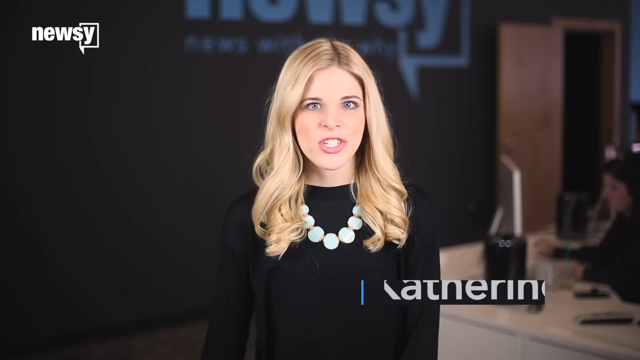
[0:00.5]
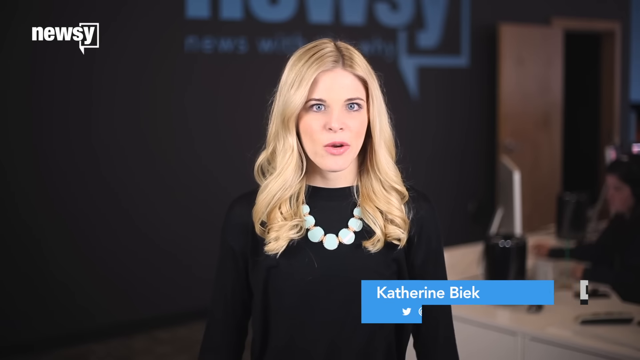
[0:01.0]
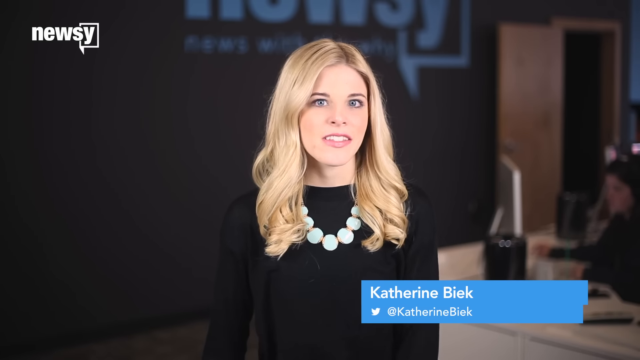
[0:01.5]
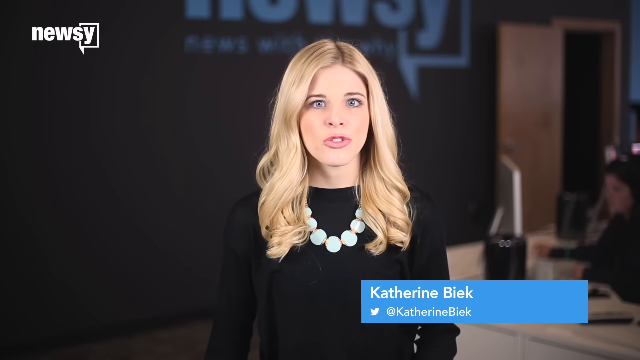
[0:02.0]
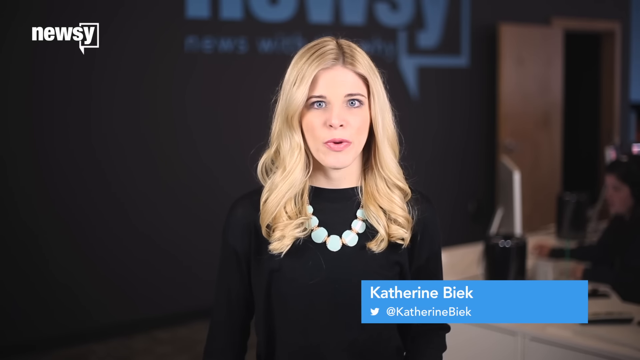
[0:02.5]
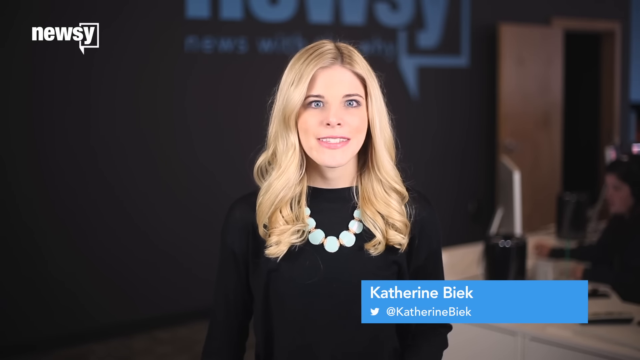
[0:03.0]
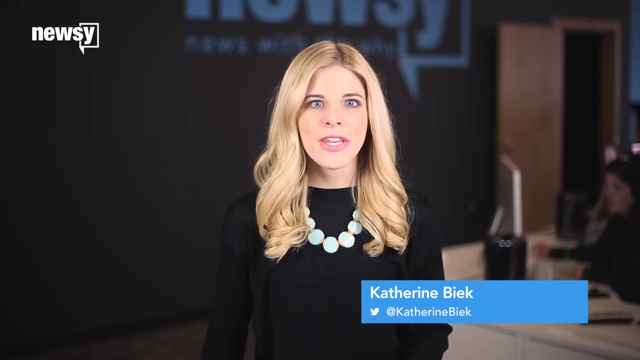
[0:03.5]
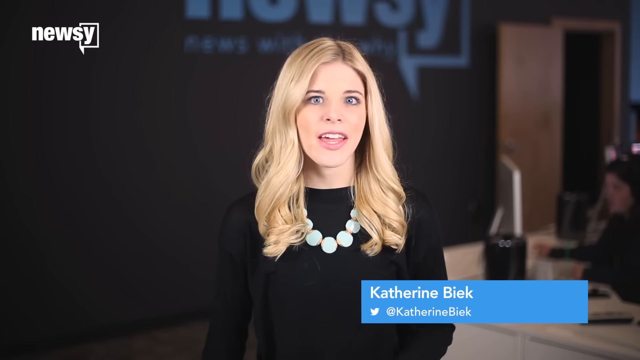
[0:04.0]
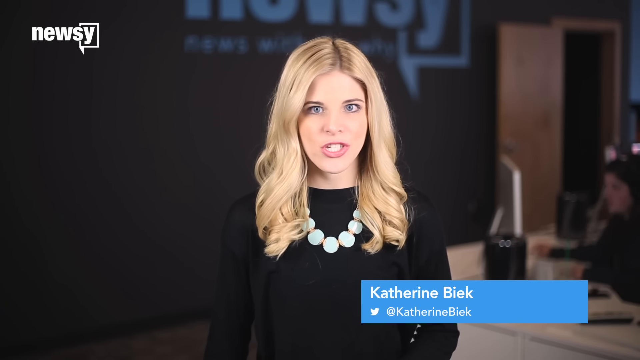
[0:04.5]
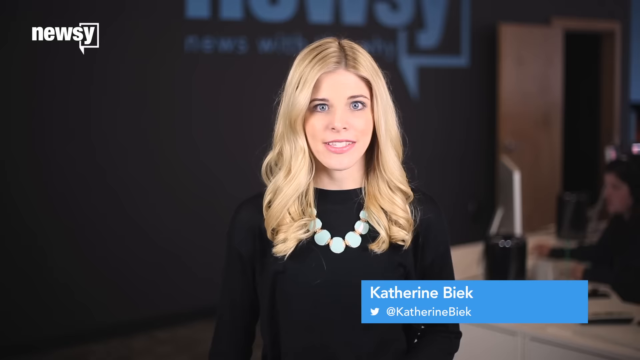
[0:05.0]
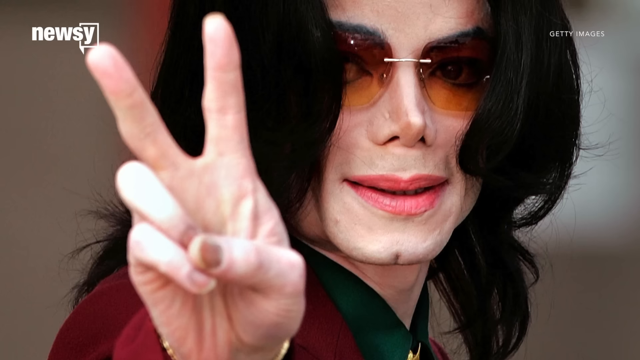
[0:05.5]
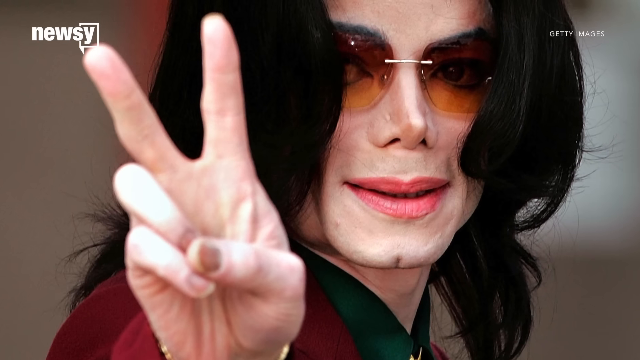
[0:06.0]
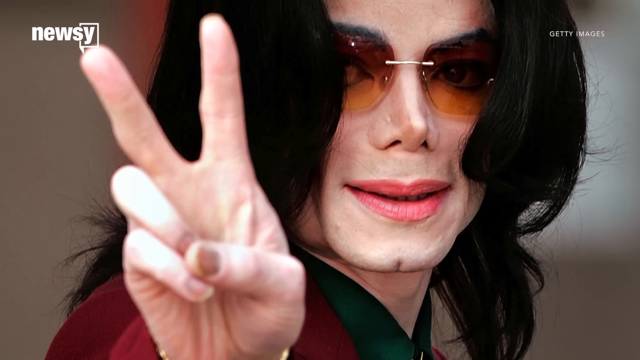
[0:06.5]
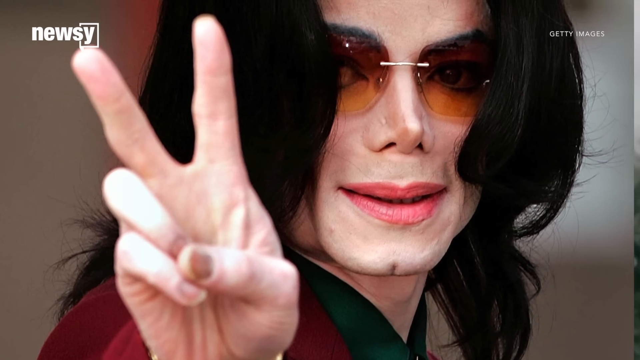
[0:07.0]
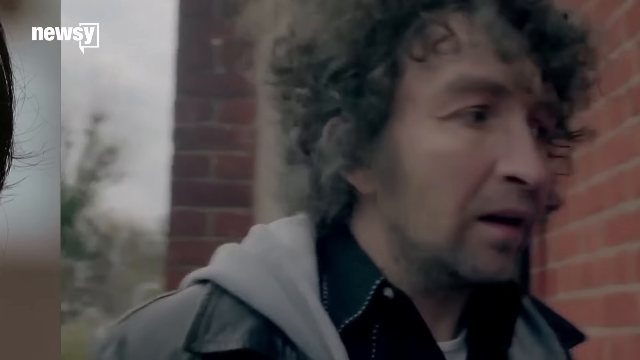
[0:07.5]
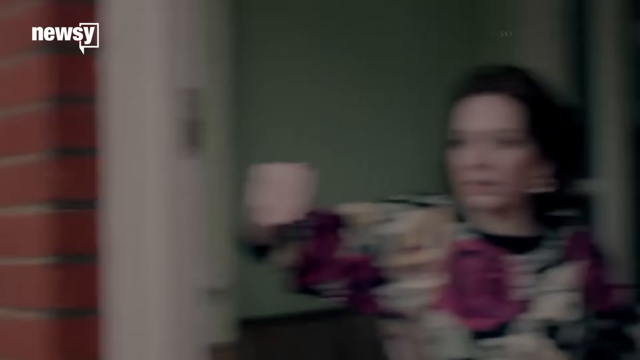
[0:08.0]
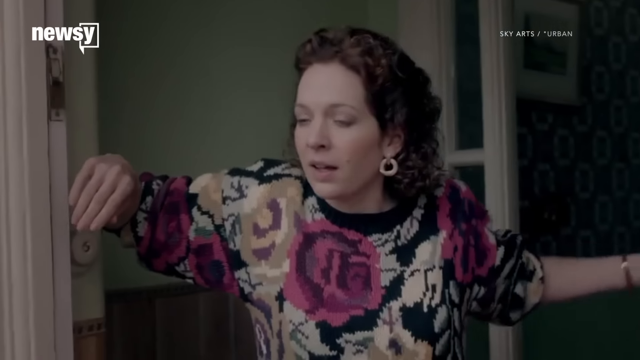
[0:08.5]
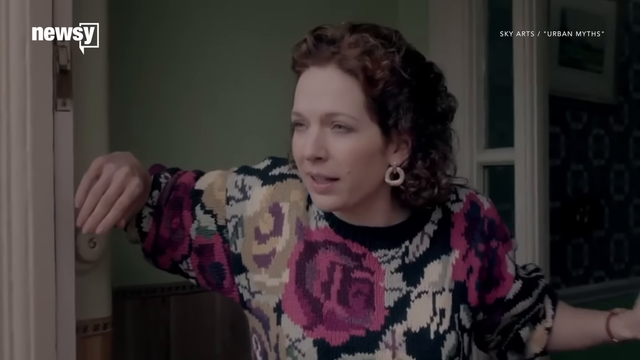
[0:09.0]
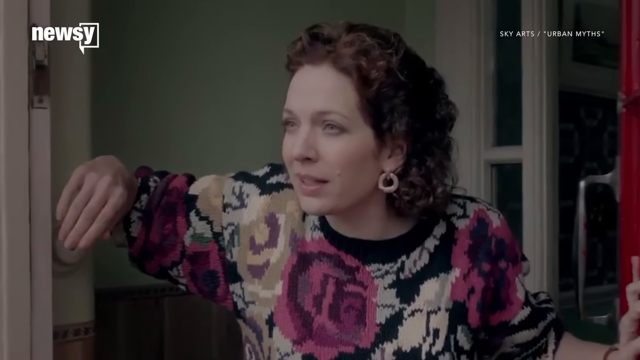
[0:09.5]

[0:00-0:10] A blonde-haired woman with flowing, shoulder-length hair wears a black dress and a white necklace. A banner shows her name, Katherine Biek, written in white, along with her Twitter handle. Her lips are moving and her teeth are white, and she moves her head as she talks. In the background there is a black screen board, and someone sits to the right of the screen looking at a computer with a hand on the desk. The video transitions to an image of Michael Jackson making the peace sign; his lips are pink, his flowing hair is black, and he wears sunshades. In the top right, the text "Getty Image" appears in white. Next, a man with curly hair stands close to the door of a building with clay walls, and a woman stands at the door resting her hand by the door frame. She wears a sweater with floral patterns and earrings, and her hair is black.